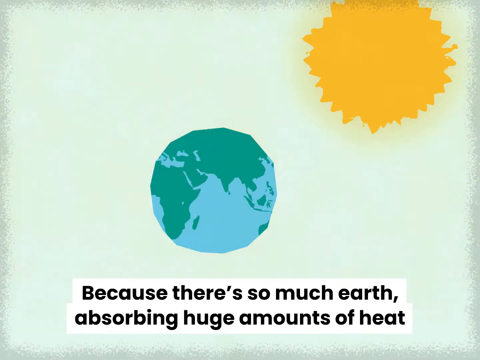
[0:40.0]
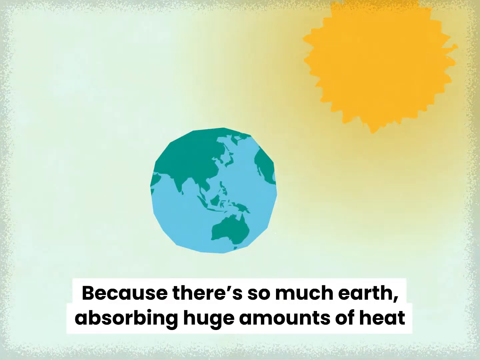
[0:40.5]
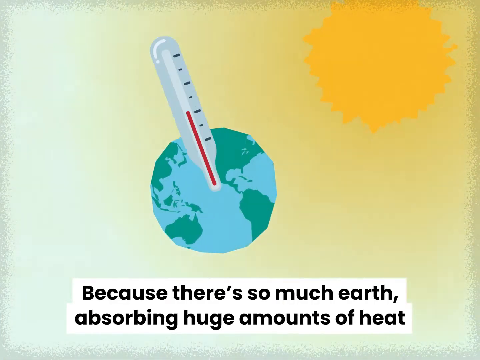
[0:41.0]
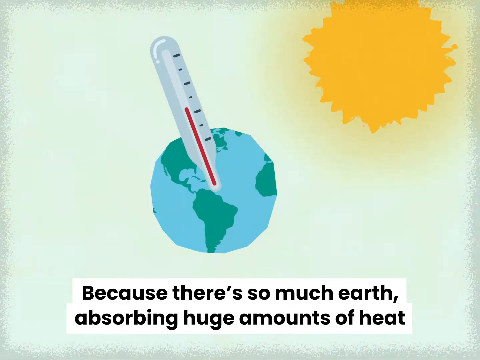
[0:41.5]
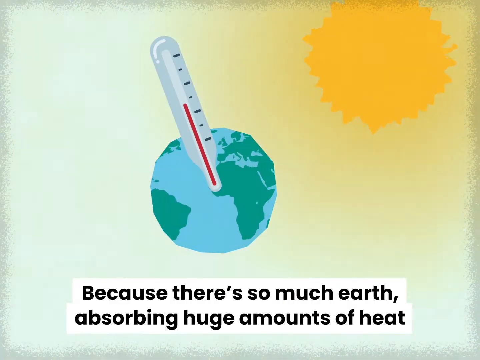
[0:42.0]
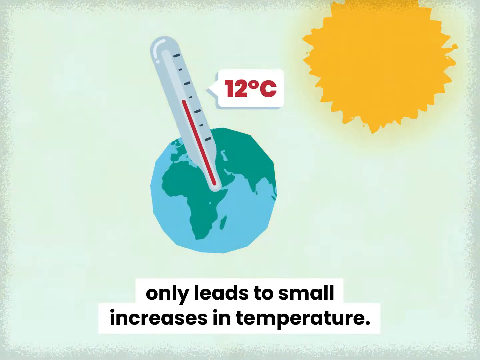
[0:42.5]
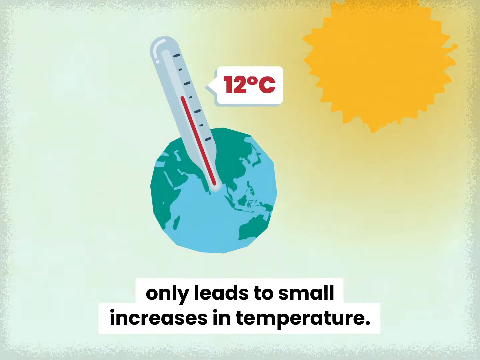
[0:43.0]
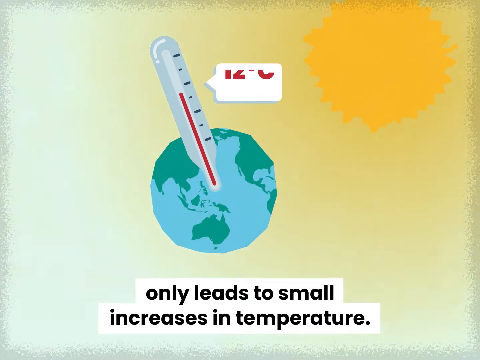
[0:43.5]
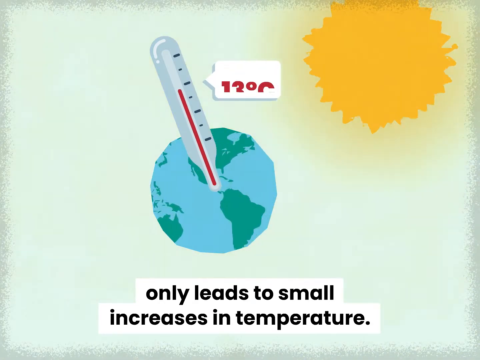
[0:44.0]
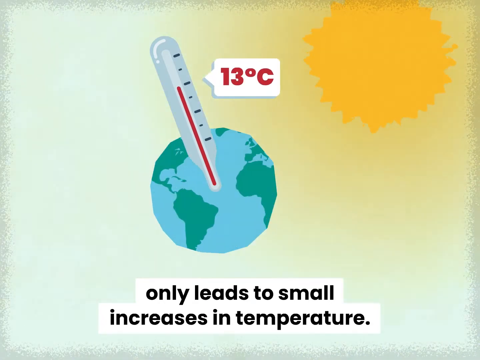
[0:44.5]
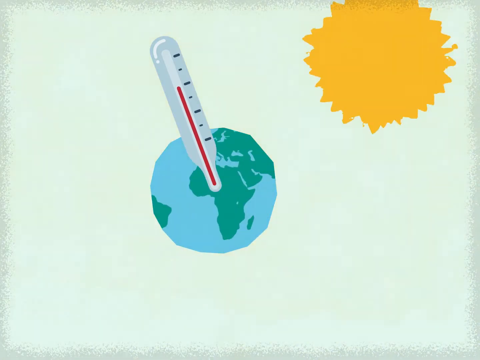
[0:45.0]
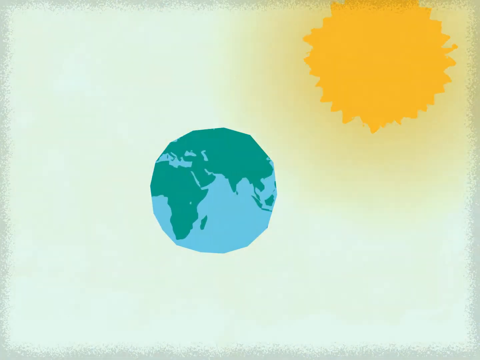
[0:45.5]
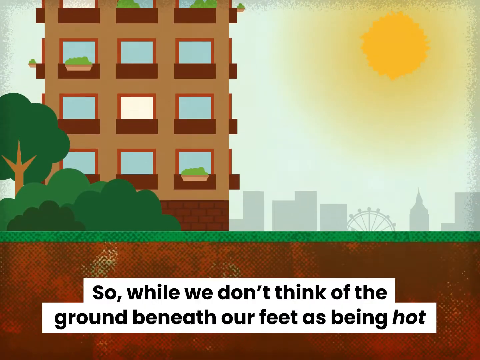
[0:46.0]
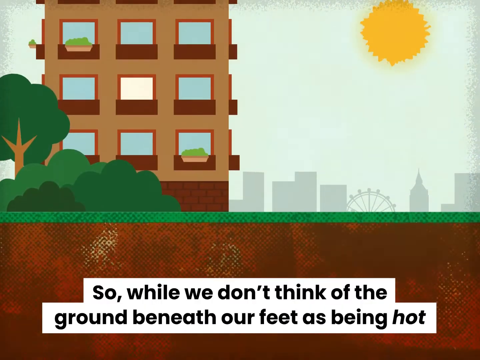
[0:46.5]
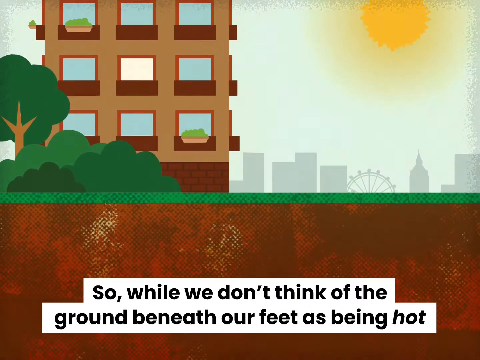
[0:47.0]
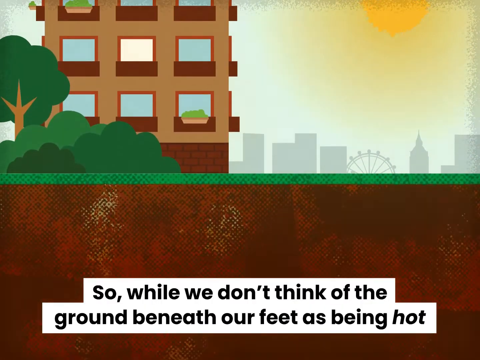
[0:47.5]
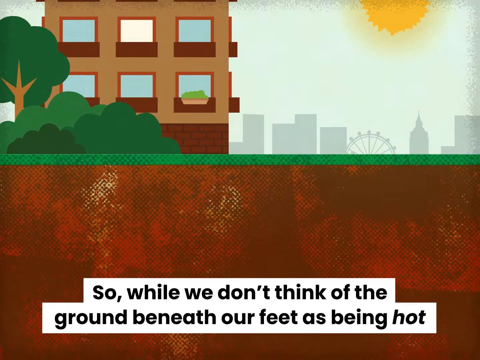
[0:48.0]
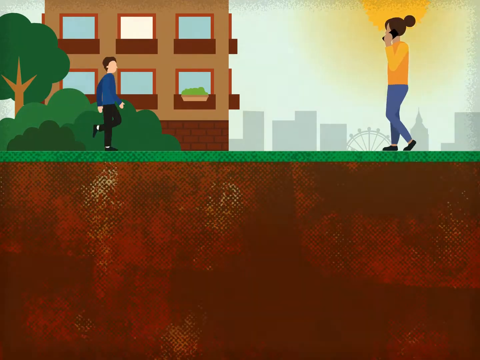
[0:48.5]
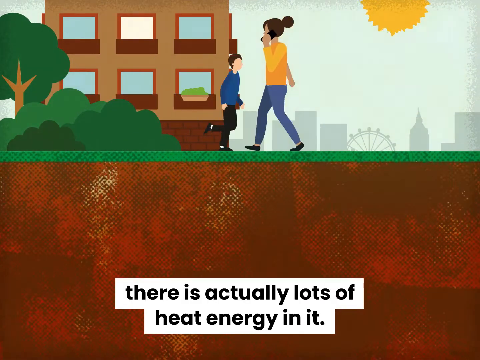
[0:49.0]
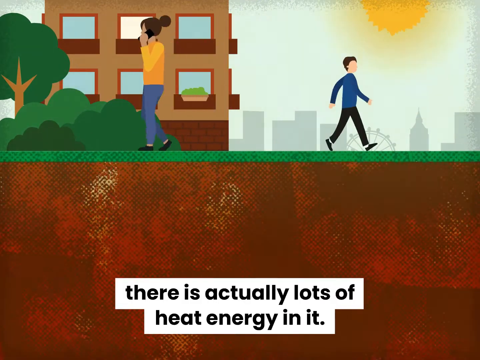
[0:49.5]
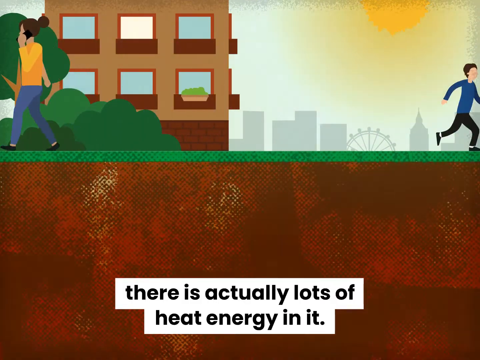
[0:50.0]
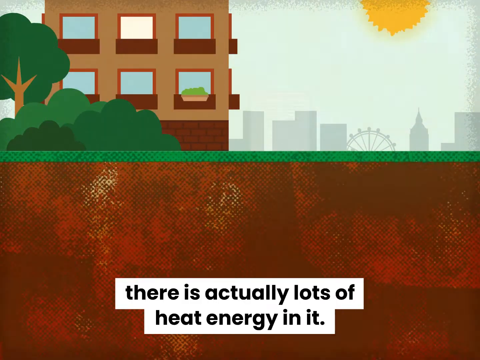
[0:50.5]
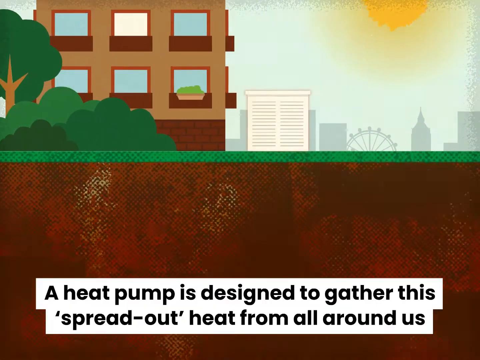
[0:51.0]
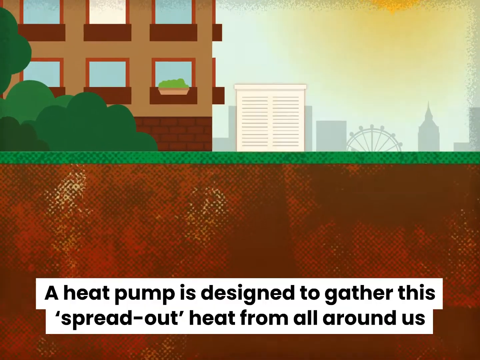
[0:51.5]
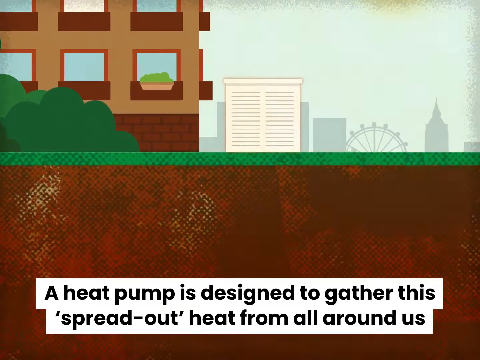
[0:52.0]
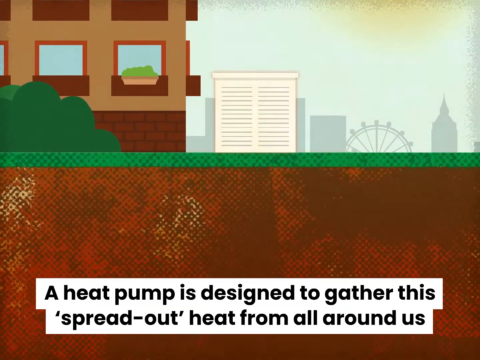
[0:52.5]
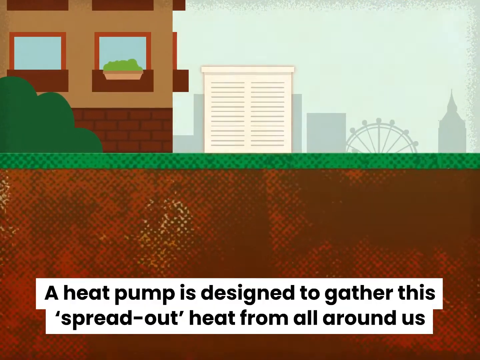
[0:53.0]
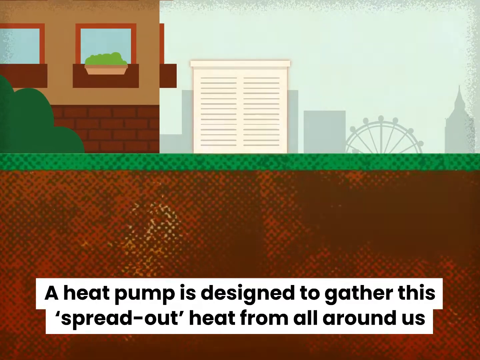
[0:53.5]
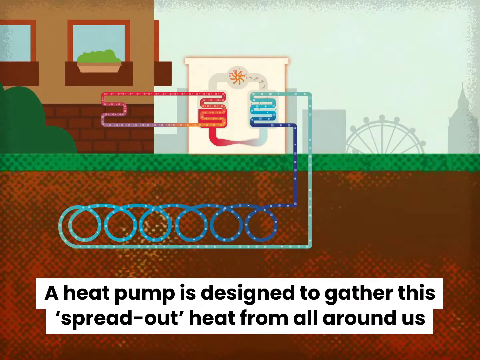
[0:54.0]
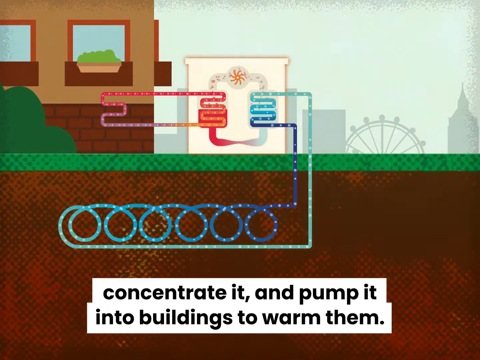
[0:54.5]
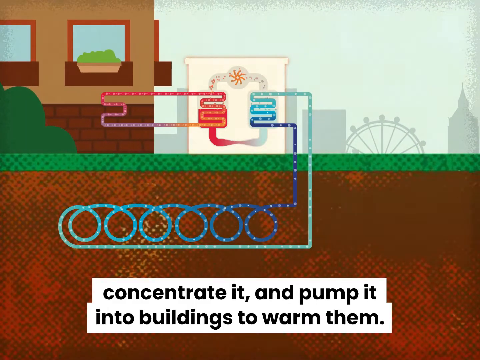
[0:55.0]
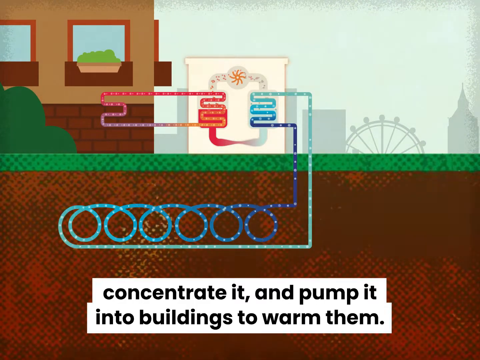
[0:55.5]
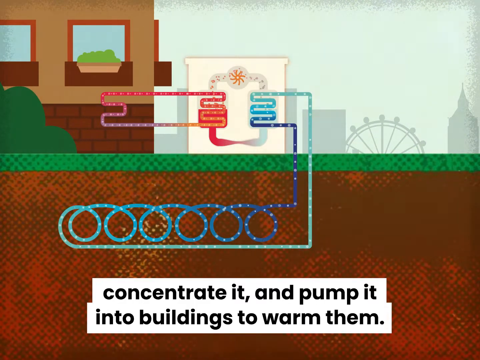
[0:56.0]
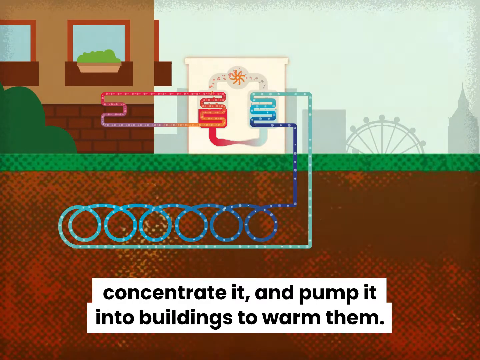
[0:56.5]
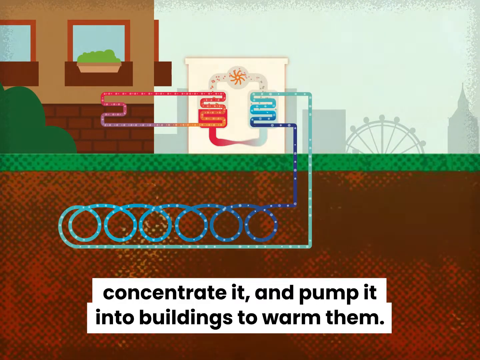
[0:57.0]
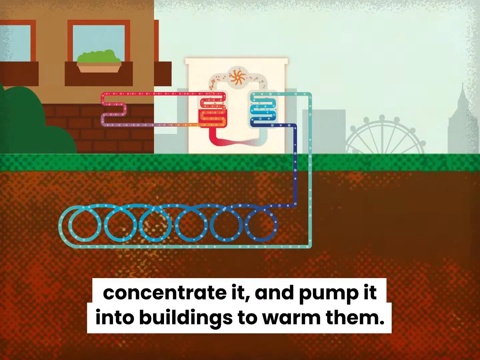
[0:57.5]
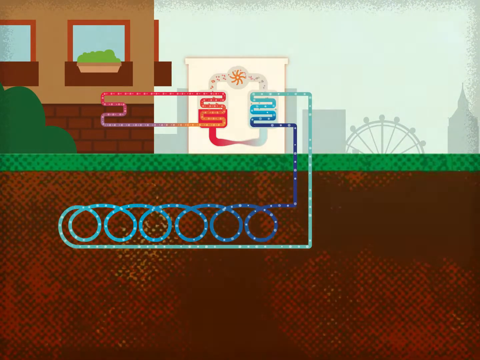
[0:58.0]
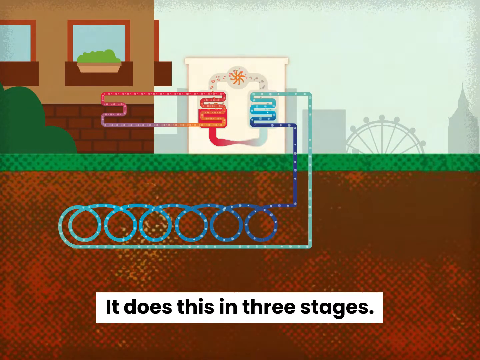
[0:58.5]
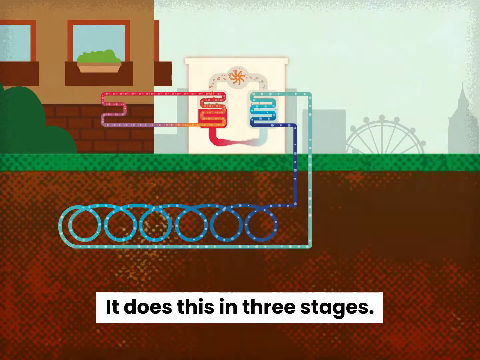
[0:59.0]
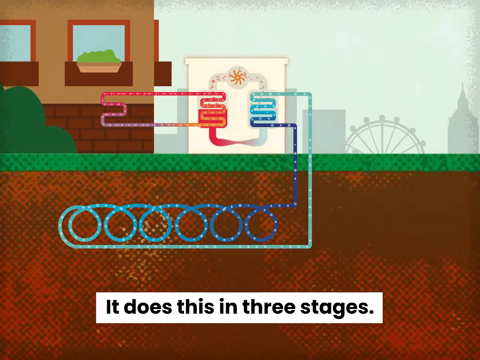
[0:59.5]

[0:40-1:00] The Earth spins while the Sun stays in the top right, shining down onto it. The Earth is not perfectly round and has jagged edges. A thermometer attaches itself to the Earth and rises slowly. The subtitles at the bottom read "because there's so much Earth, absorbing huge amounts of heat only leads to small increases in temperature. So while we don't think of the ground beneath our feet as being hot, there's actually lots of heat energy in it. The heat pump is designed to get this spread out heat from all around us and concentrate it and pump it into buildings to warm them." The visuals show people running on the ground and walking on the sidewalk, including a lady in yellow and a guy in blue.